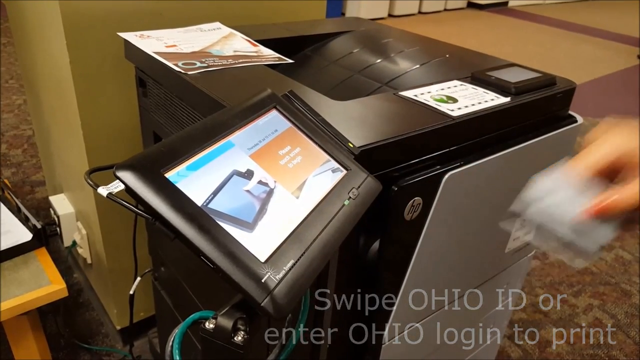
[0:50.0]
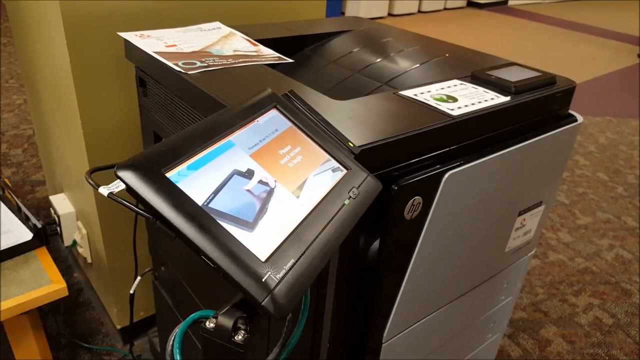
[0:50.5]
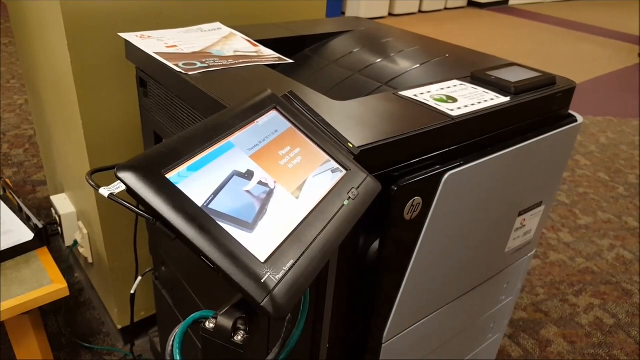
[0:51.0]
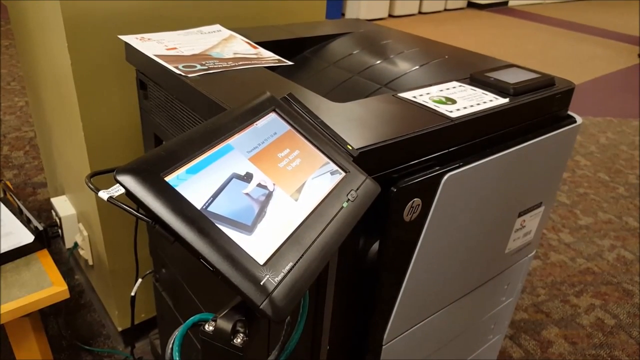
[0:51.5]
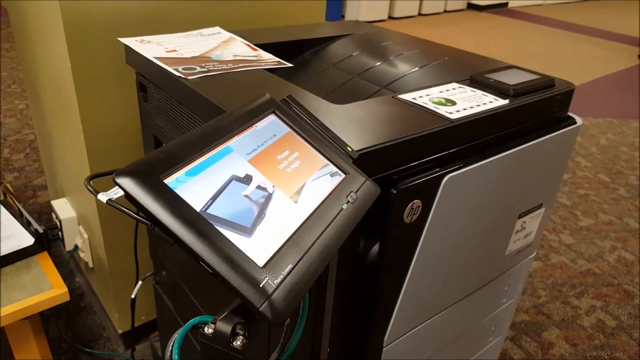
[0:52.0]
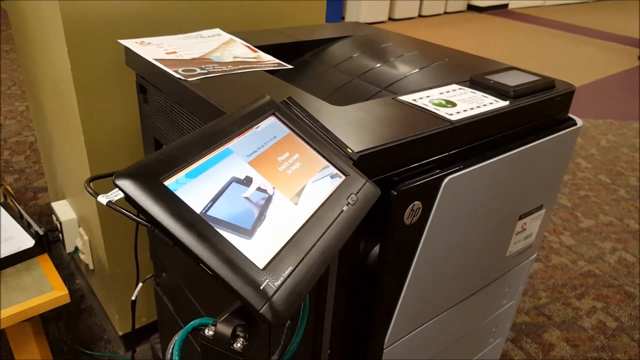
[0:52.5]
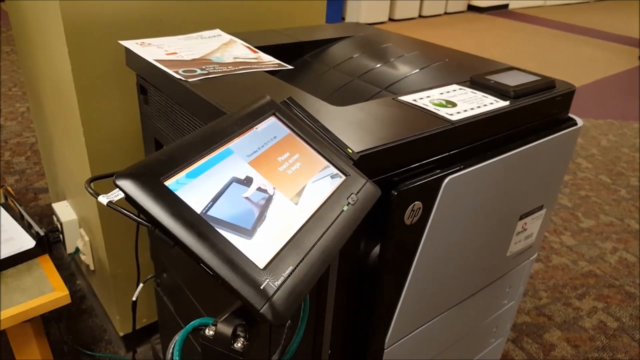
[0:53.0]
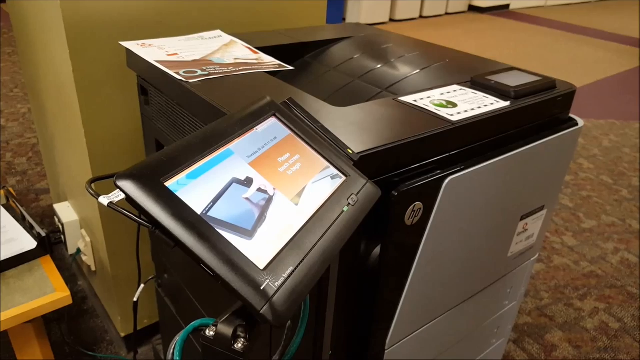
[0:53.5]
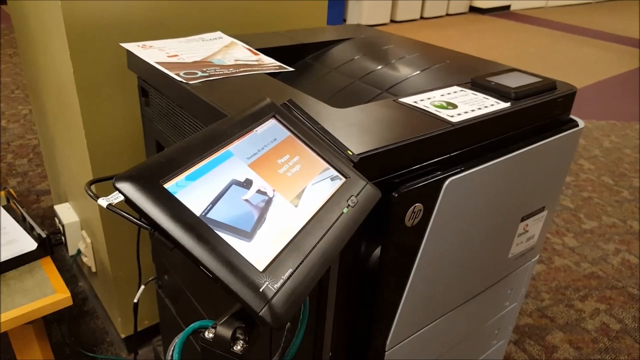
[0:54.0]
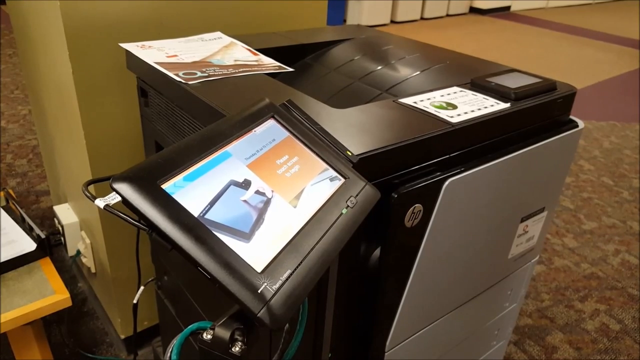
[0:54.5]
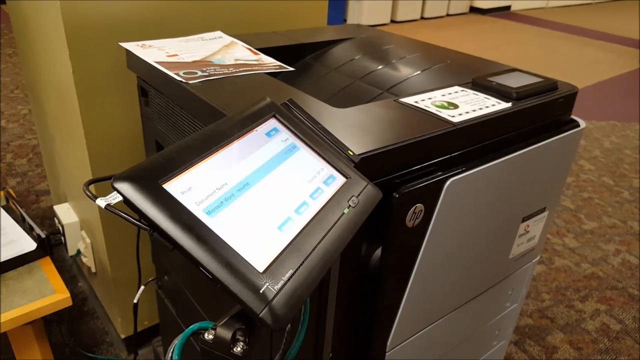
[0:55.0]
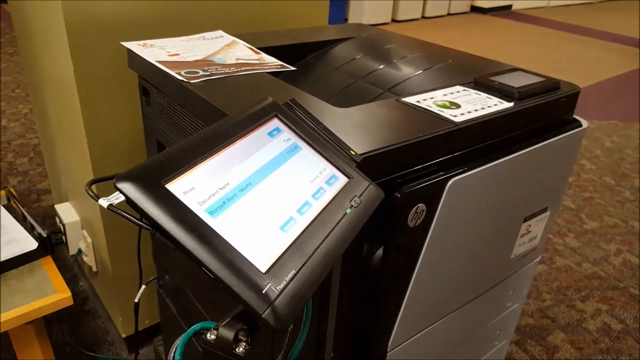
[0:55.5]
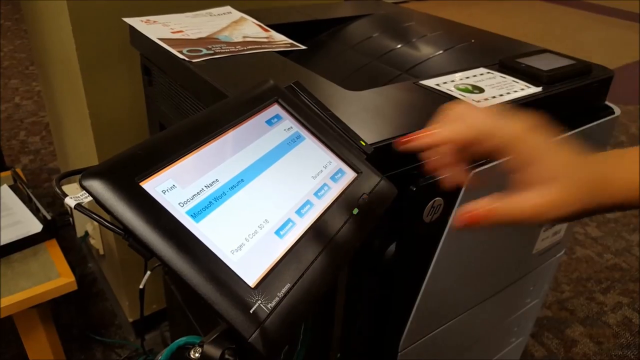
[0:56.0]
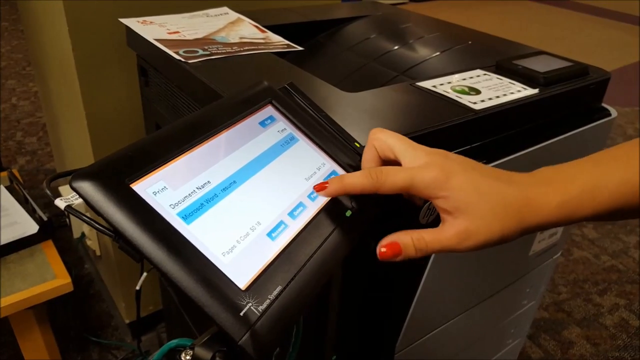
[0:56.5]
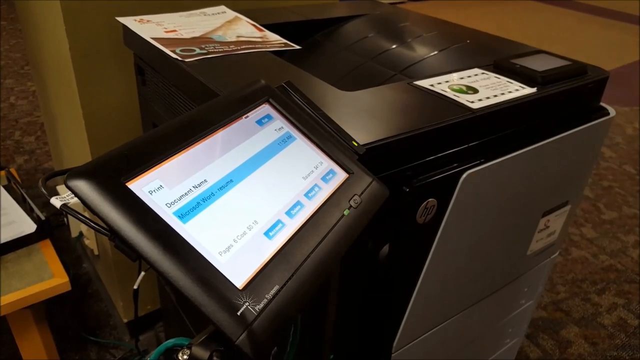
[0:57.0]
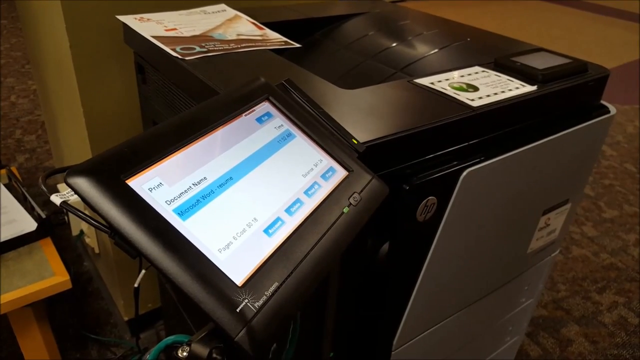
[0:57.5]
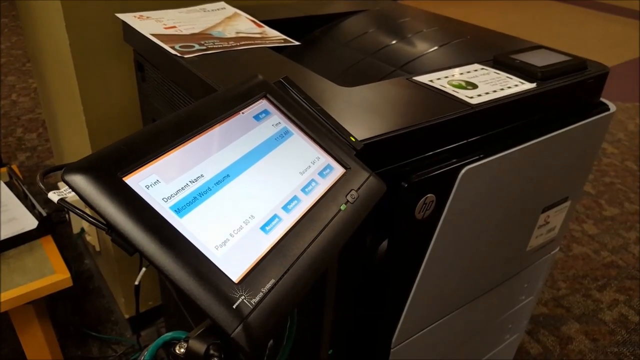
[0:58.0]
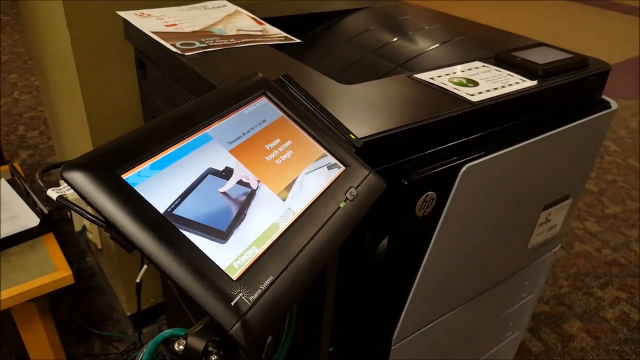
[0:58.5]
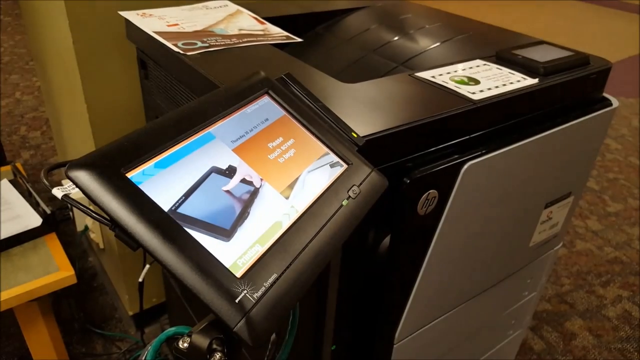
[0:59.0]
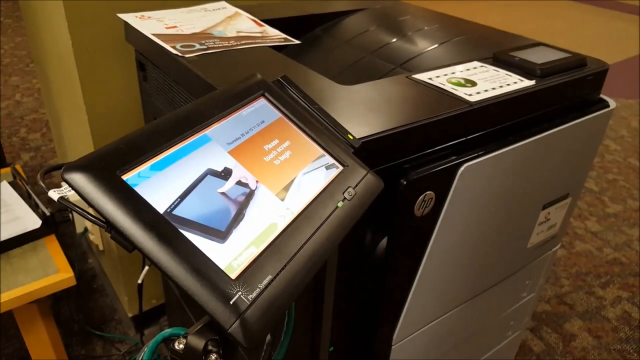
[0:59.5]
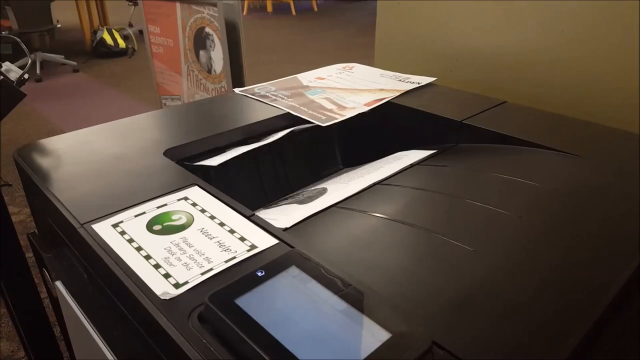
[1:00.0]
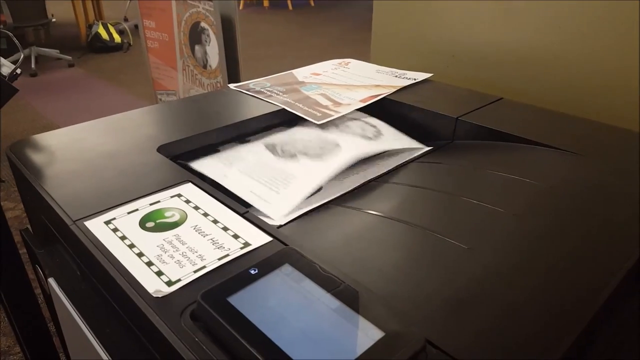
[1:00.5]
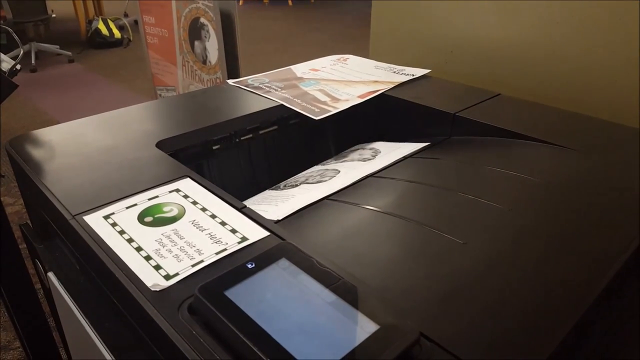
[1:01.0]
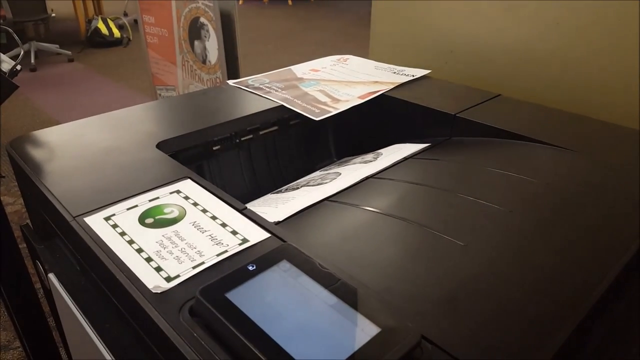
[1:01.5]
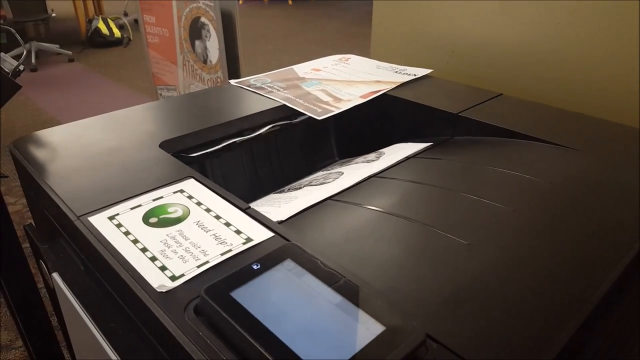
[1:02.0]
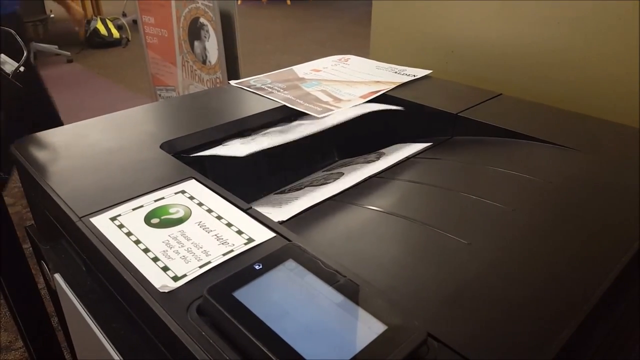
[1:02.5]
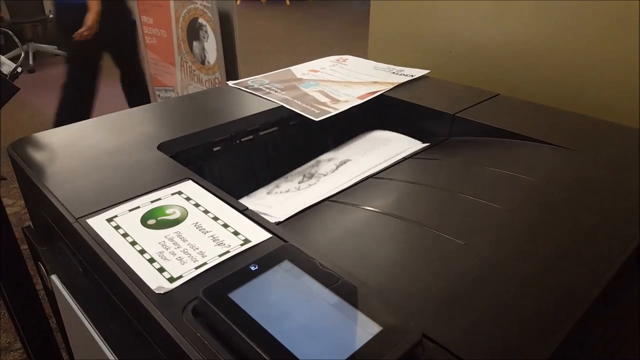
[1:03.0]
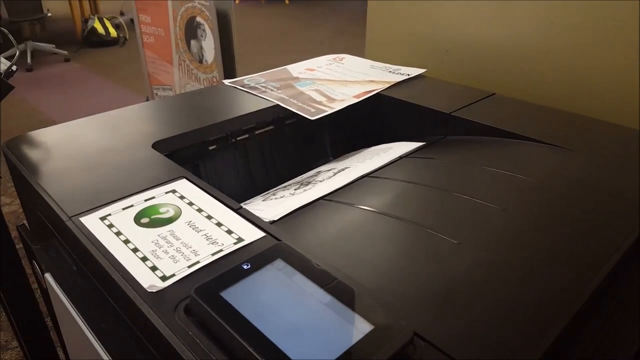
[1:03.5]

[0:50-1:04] Payment for printing is made with the access card, which pays before the paperwork is printed; there is no assistant to help with payment.